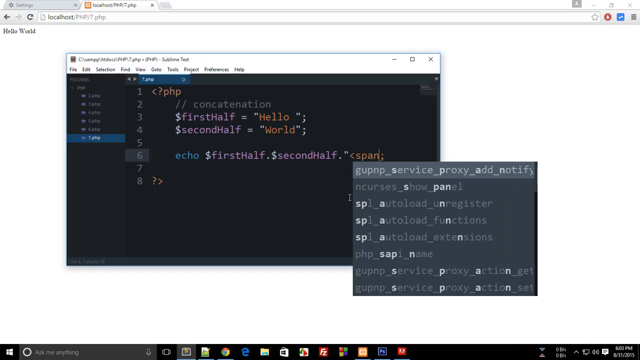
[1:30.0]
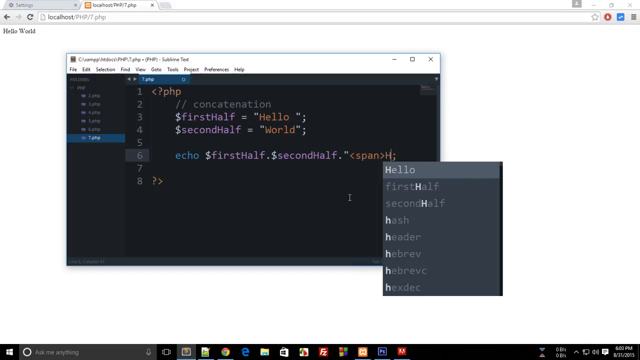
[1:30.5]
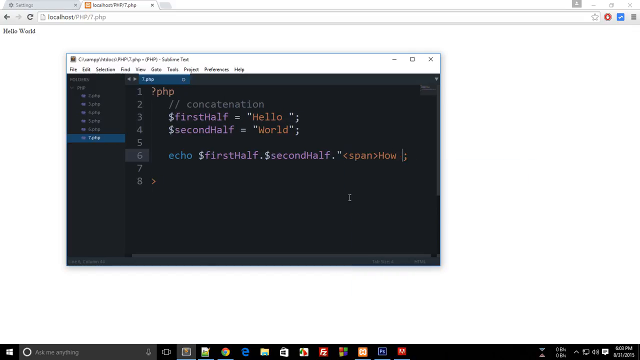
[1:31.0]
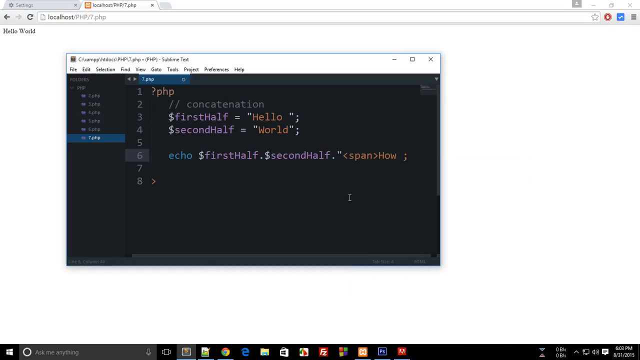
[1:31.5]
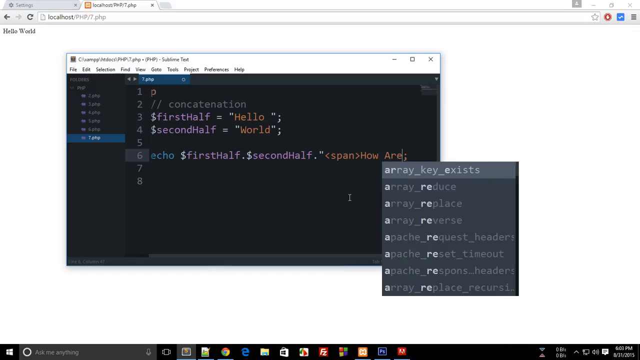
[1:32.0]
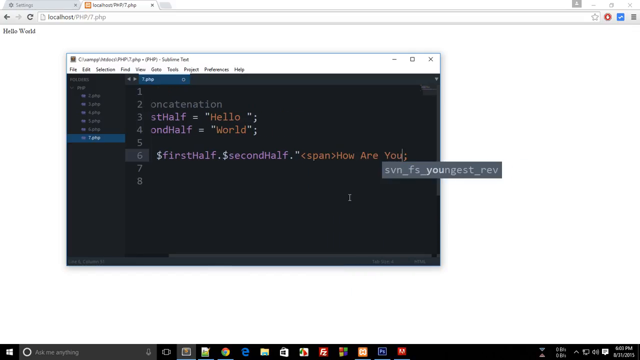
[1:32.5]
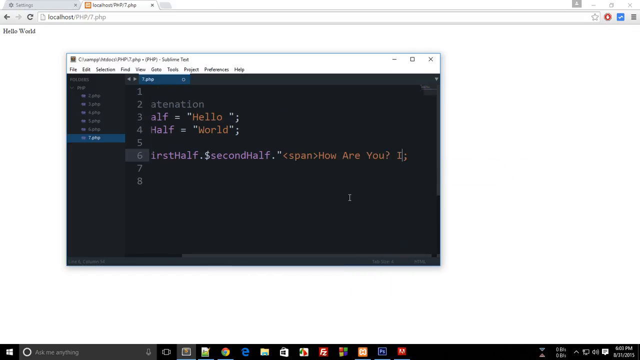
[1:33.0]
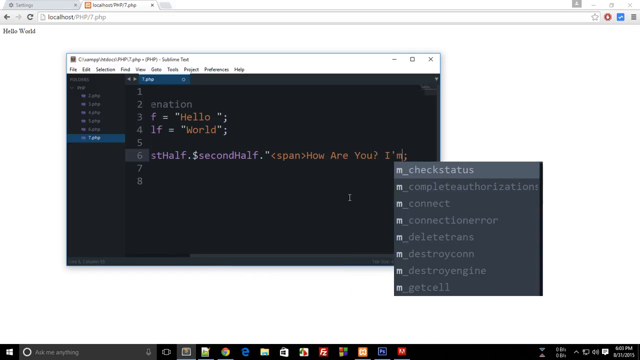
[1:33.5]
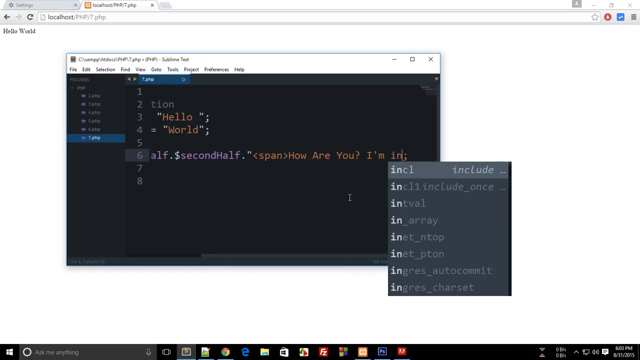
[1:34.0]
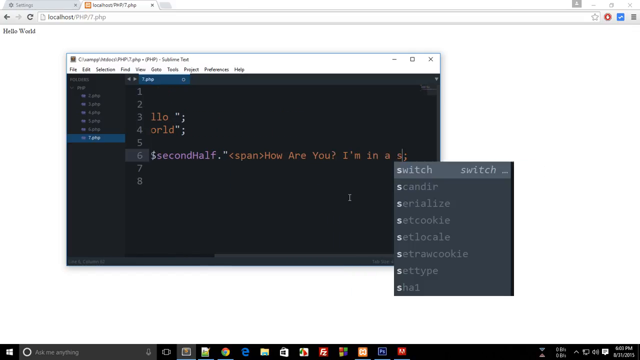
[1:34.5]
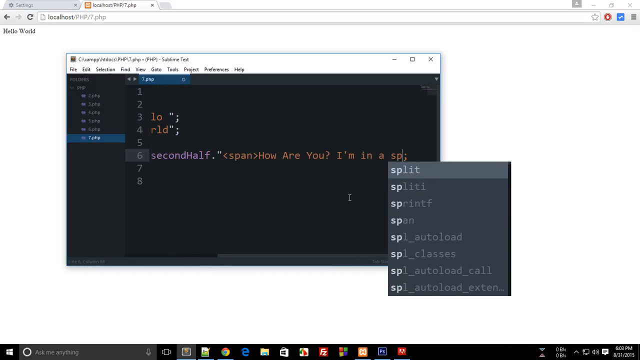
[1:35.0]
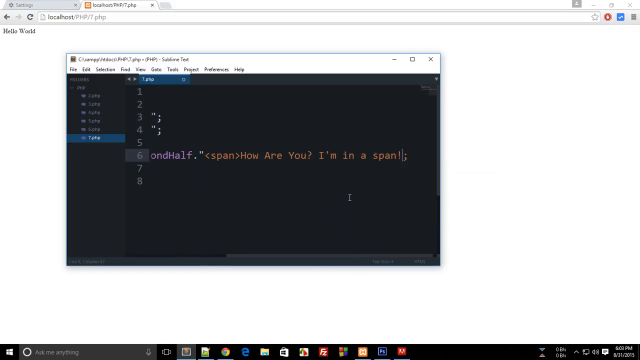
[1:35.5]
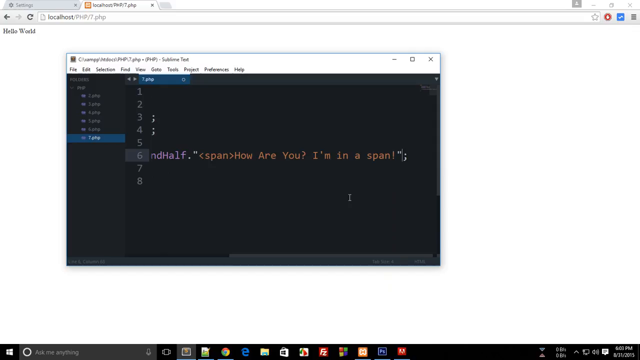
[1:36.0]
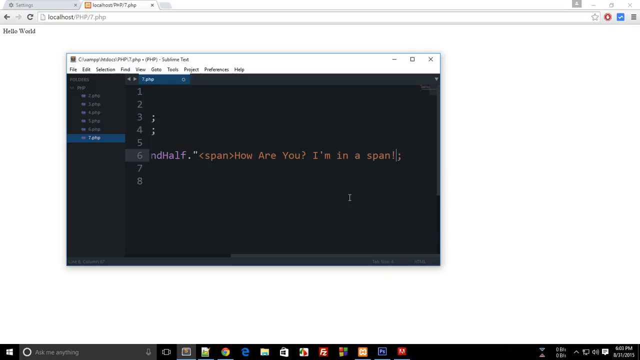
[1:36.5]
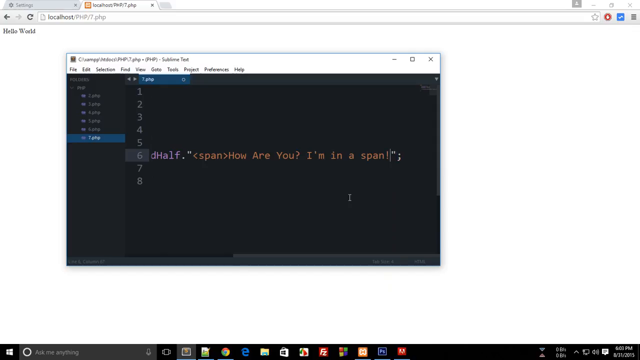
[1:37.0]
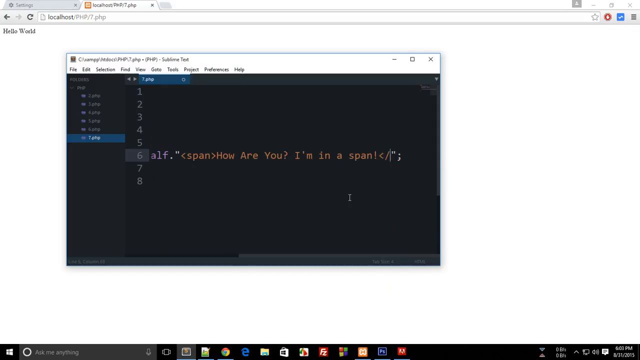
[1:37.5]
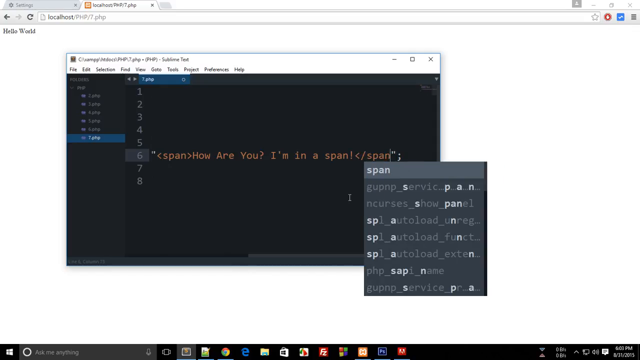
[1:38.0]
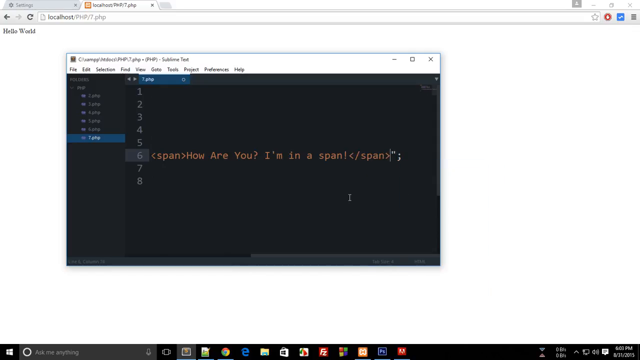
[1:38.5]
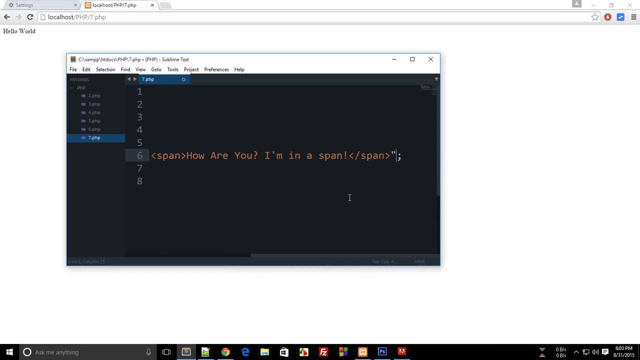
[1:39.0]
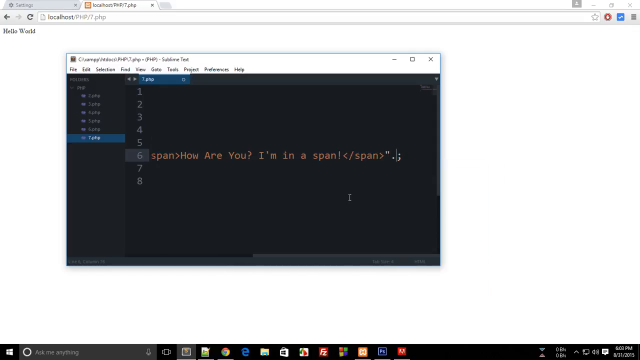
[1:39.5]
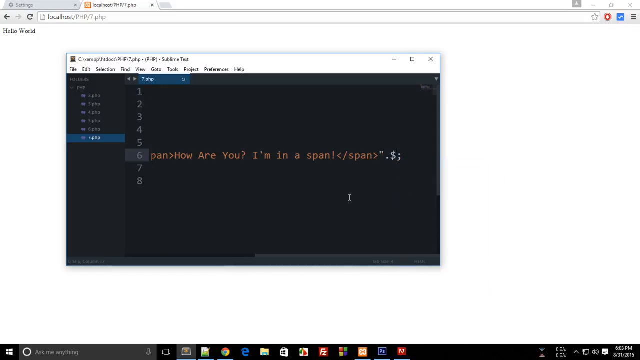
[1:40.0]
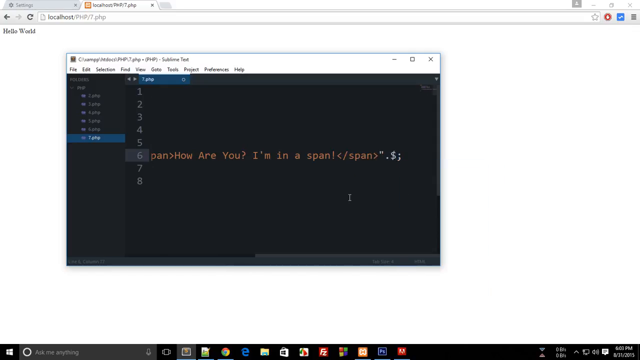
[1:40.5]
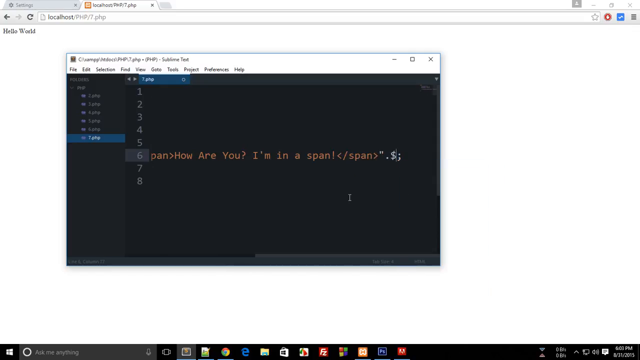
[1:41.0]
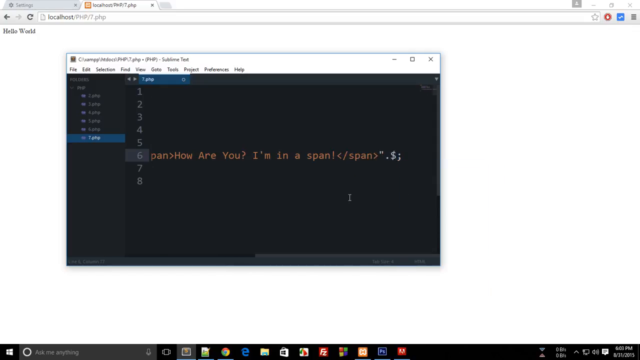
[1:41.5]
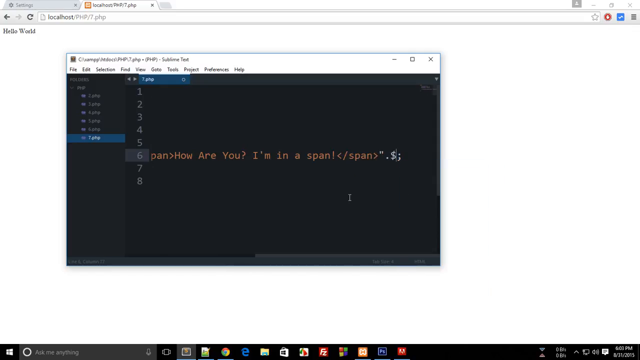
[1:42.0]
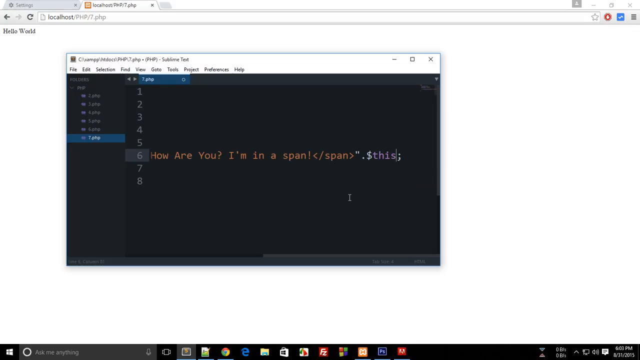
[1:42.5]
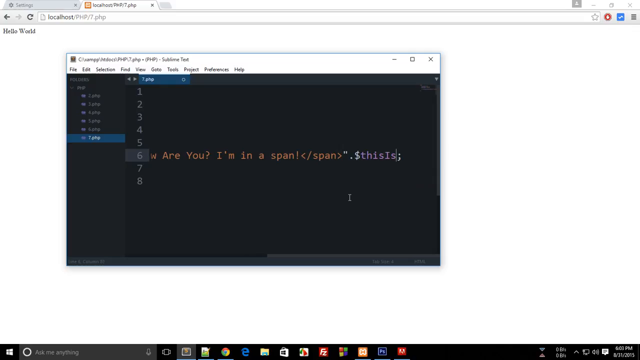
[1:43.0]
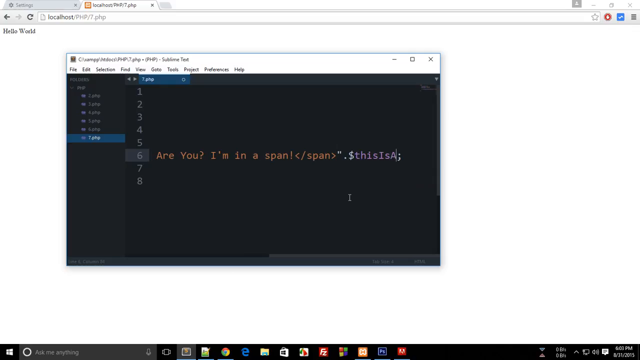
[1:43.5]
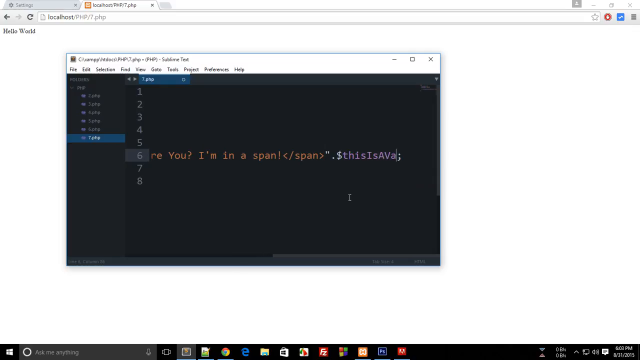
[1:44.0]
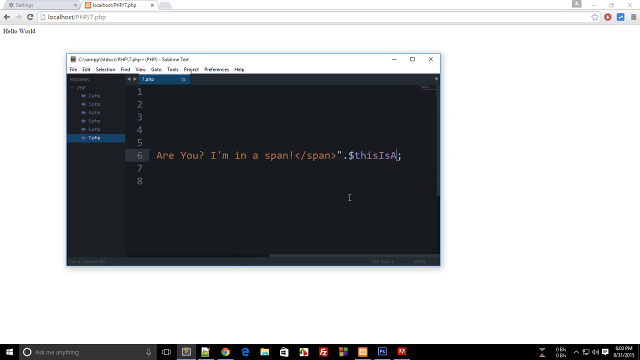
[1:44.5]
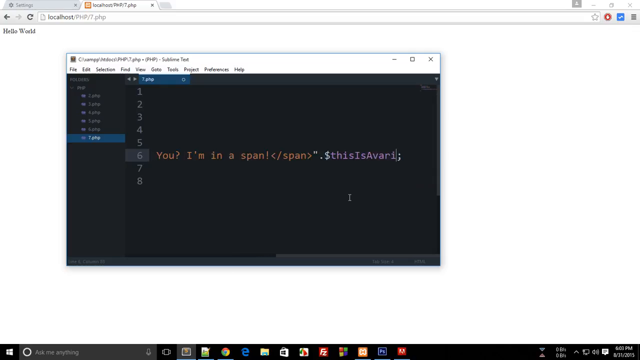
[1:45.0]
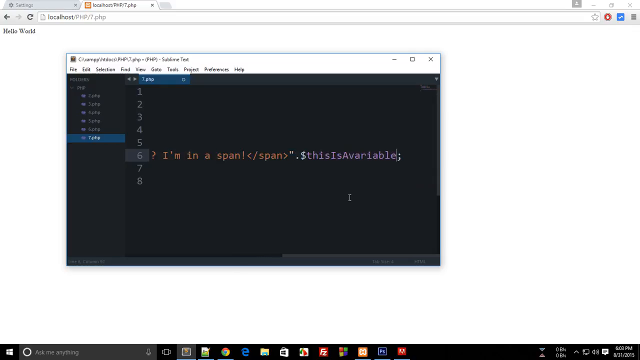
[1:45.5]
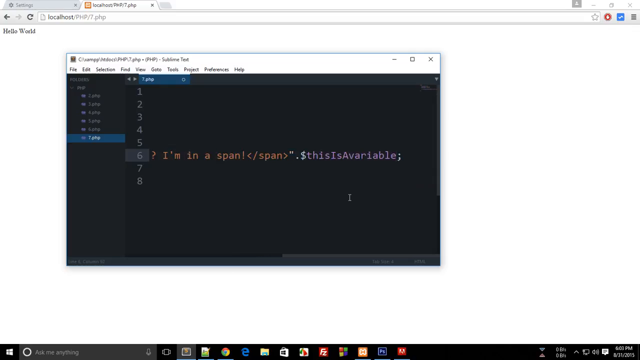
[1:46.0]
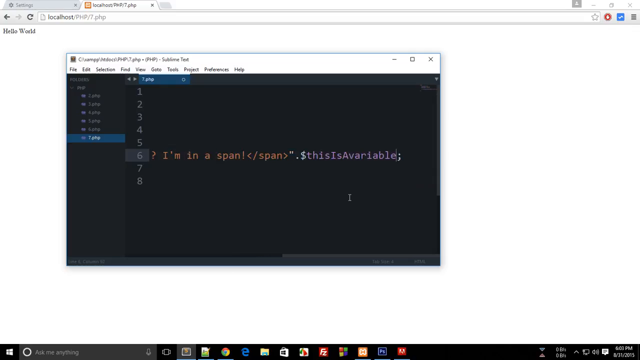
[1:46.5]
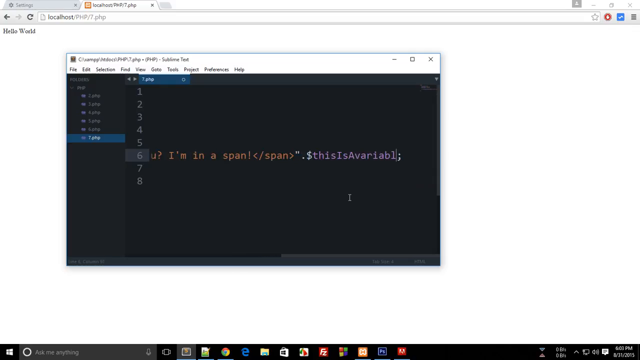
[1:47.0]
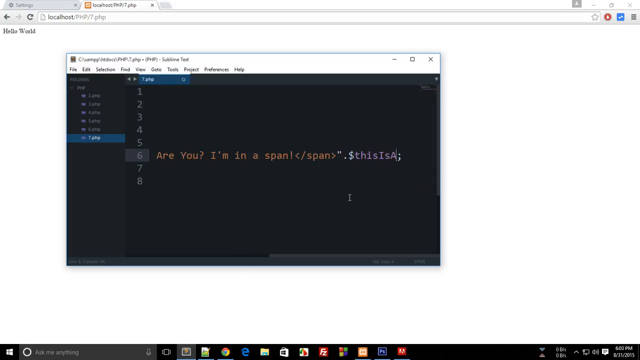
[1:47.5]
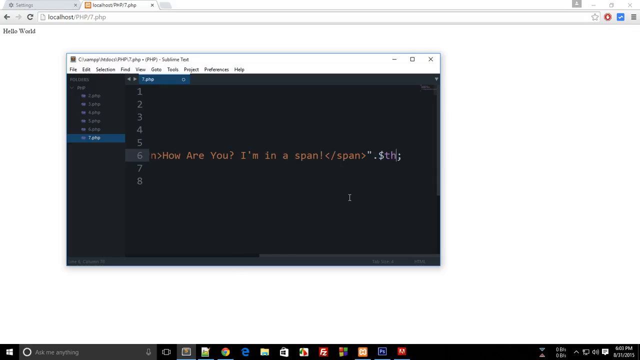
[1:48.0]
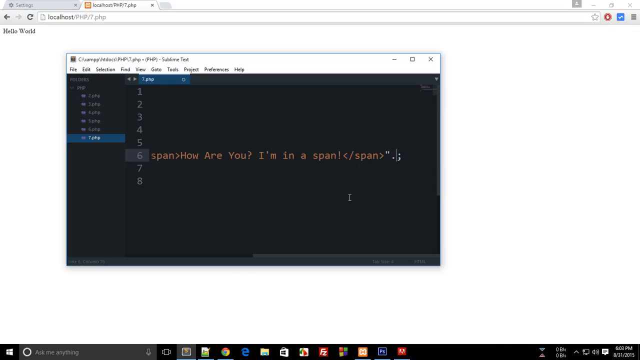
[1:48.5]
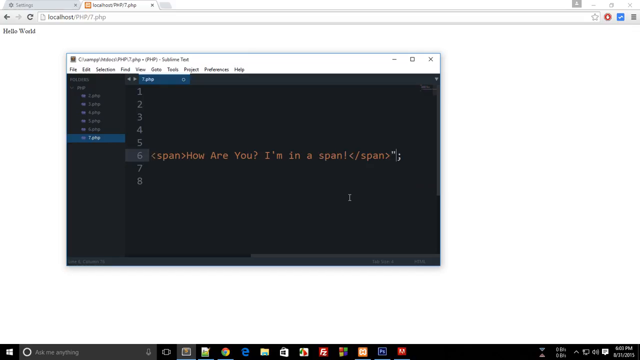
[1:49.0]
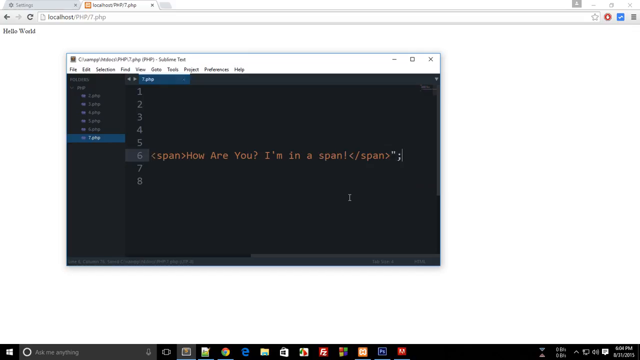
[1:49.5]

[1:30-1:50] Within the double quotes, the individual writes a span containing "how are you? I'm a span". They also begin appending another variable at the end, writing "this is a variable", but that variable is then deleted.